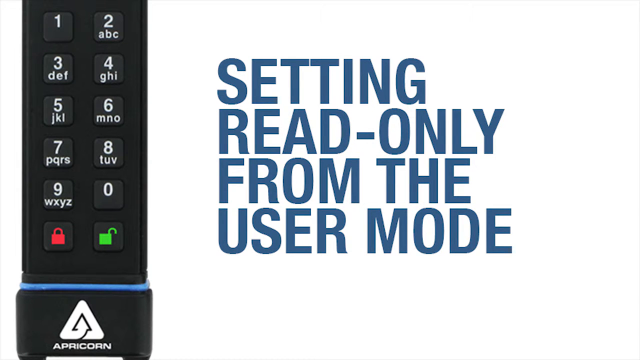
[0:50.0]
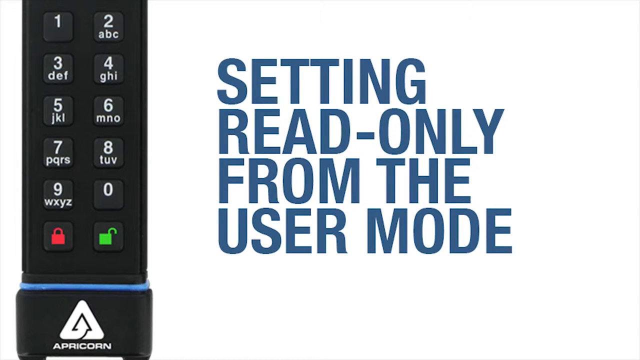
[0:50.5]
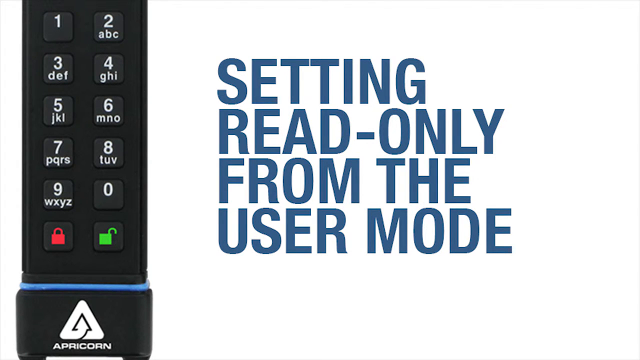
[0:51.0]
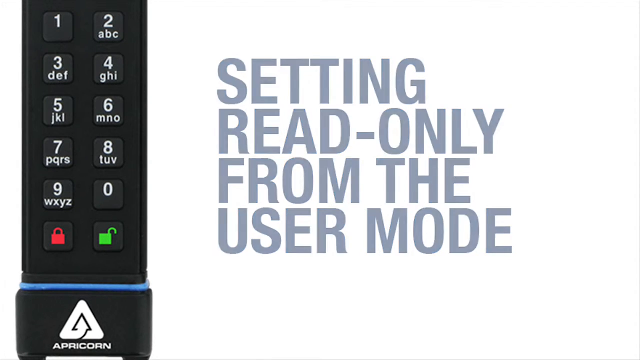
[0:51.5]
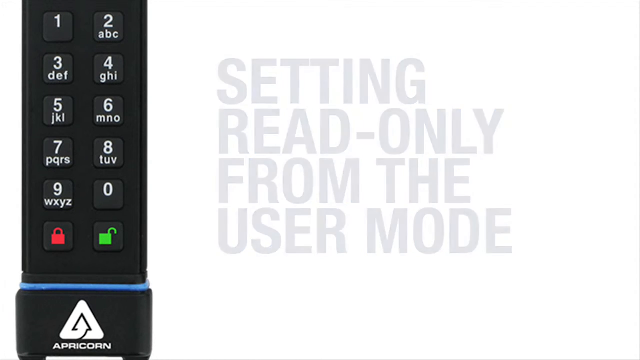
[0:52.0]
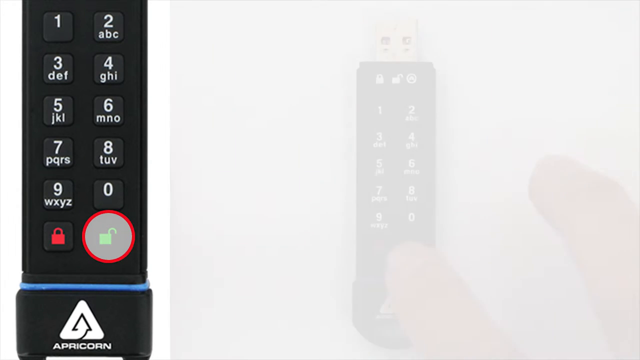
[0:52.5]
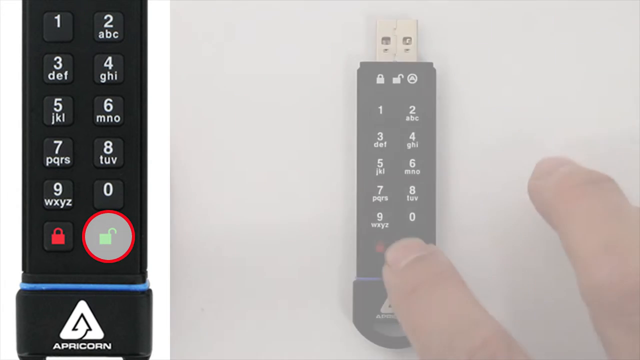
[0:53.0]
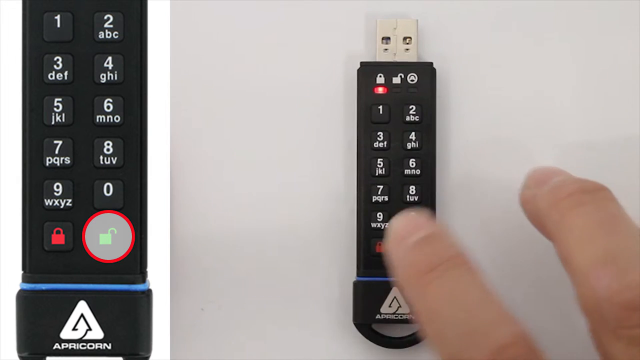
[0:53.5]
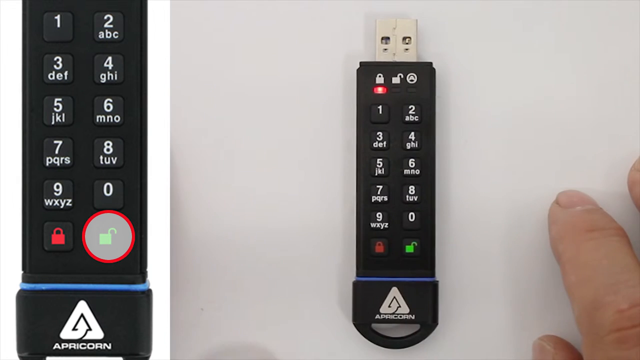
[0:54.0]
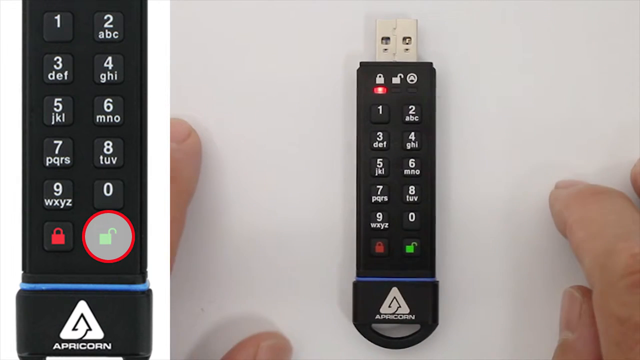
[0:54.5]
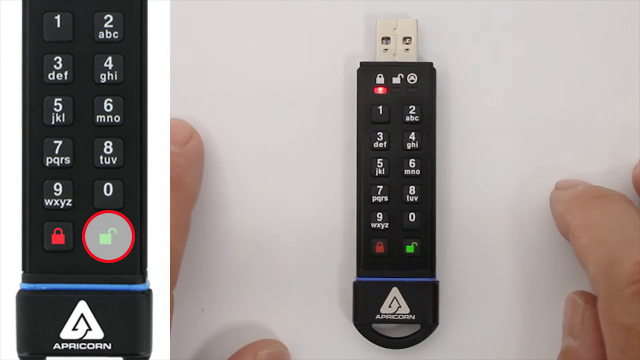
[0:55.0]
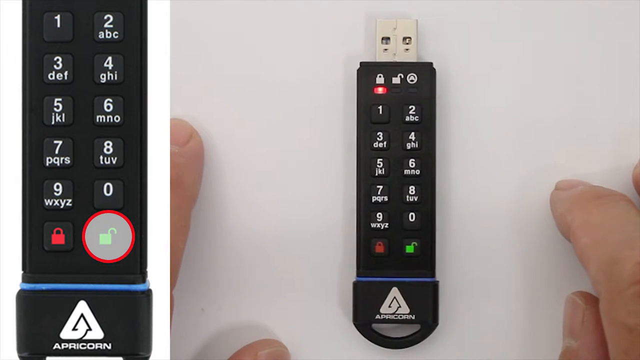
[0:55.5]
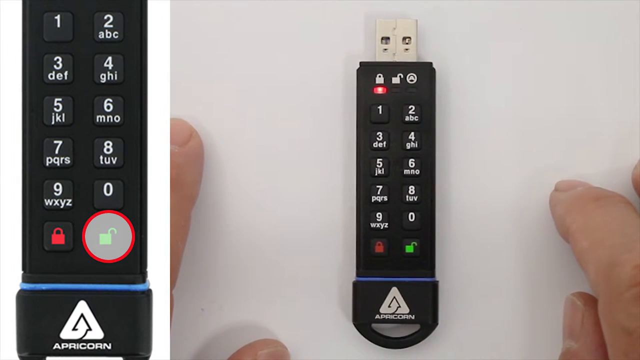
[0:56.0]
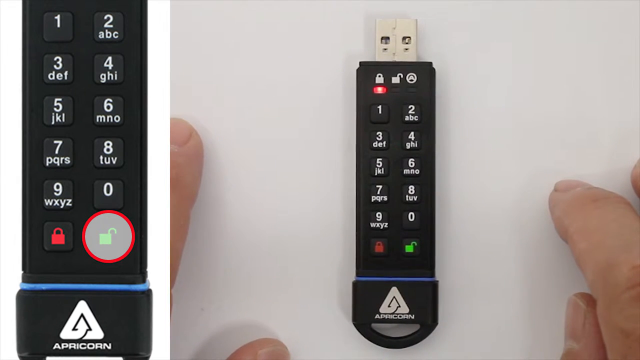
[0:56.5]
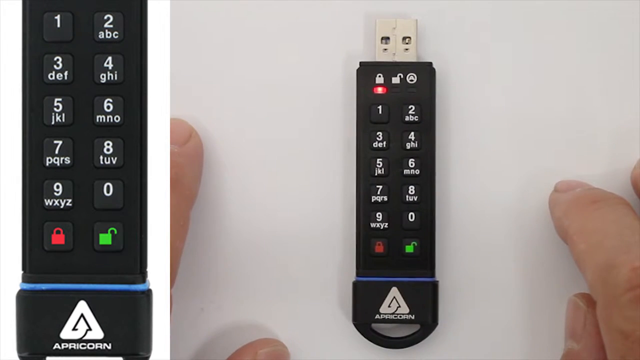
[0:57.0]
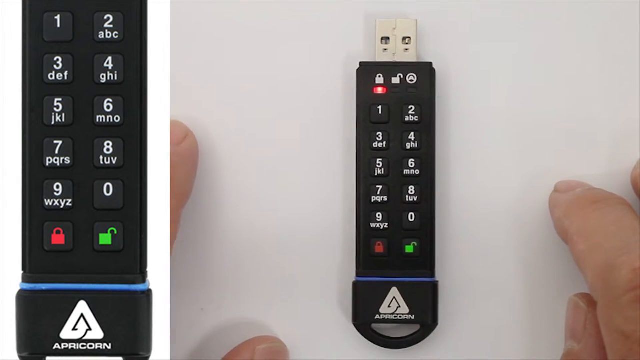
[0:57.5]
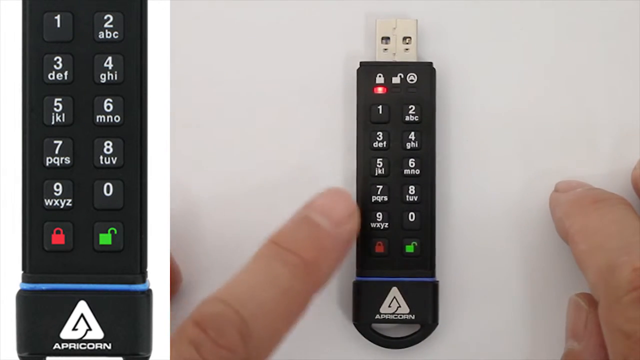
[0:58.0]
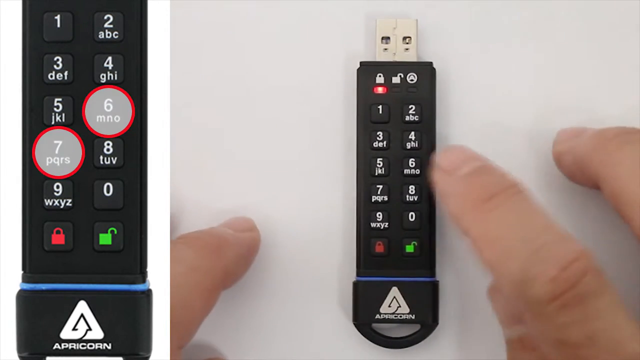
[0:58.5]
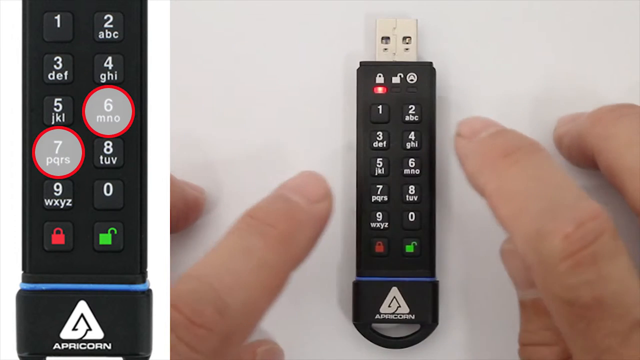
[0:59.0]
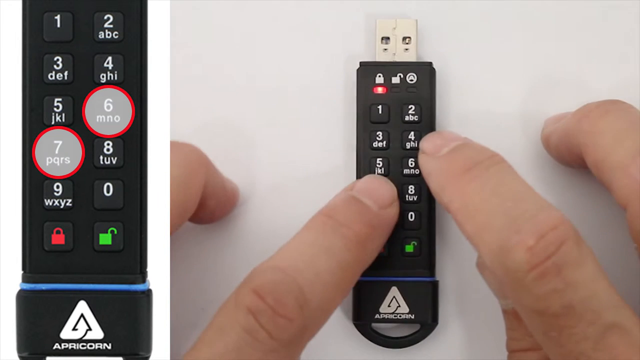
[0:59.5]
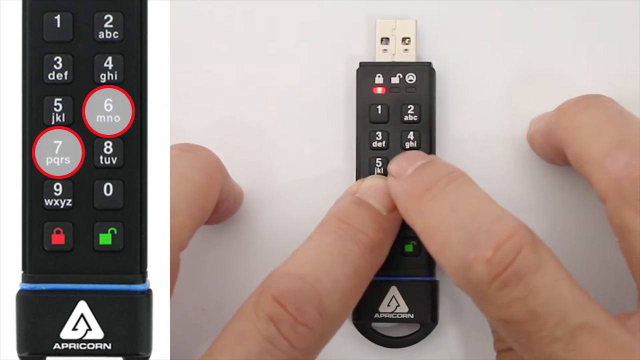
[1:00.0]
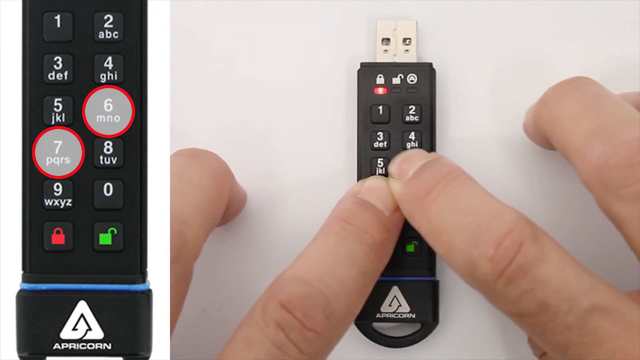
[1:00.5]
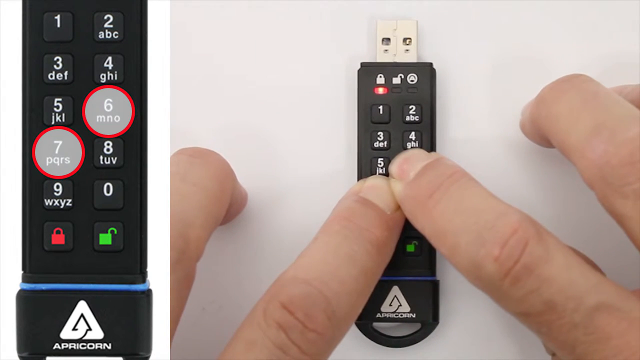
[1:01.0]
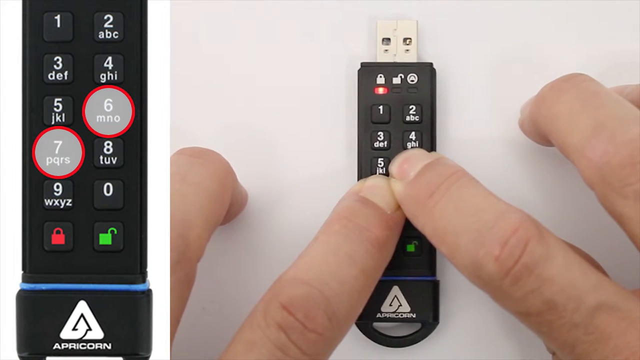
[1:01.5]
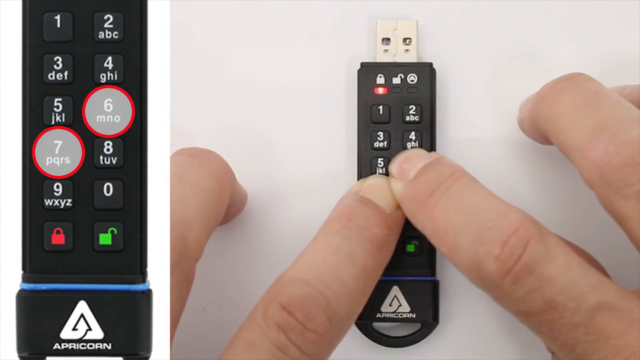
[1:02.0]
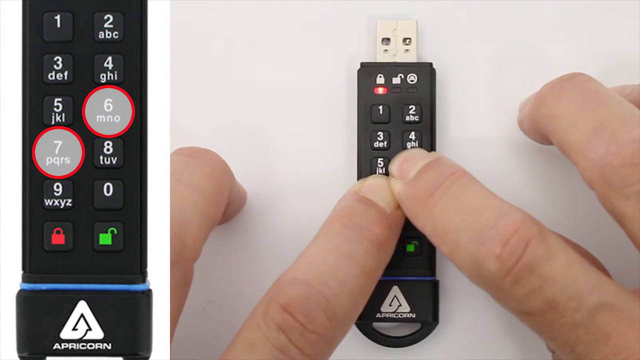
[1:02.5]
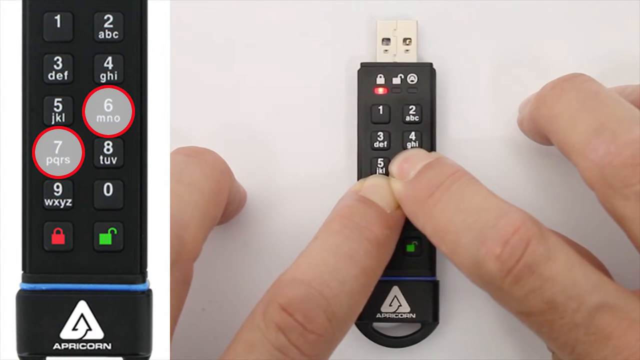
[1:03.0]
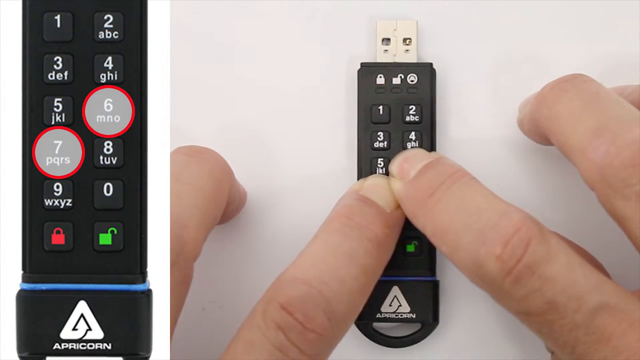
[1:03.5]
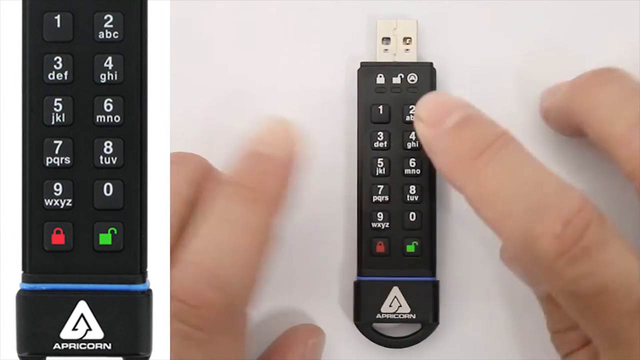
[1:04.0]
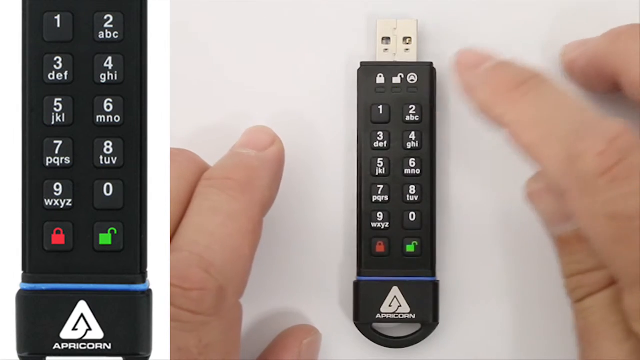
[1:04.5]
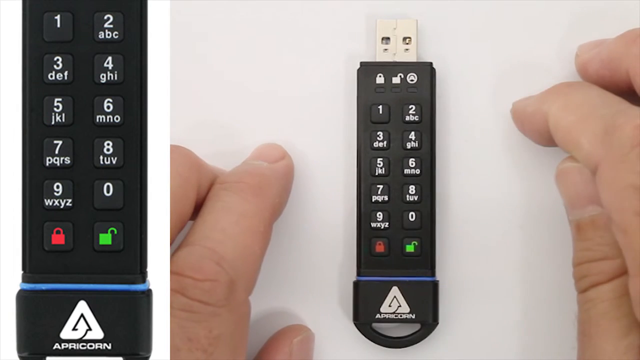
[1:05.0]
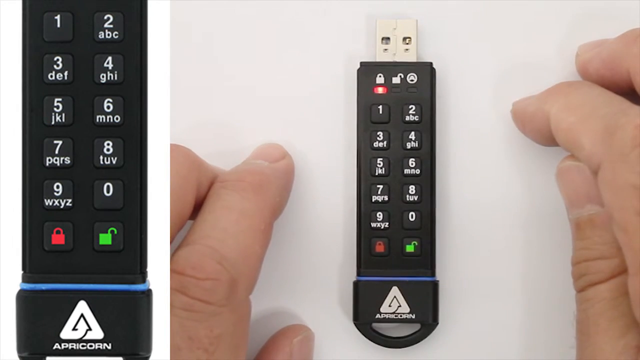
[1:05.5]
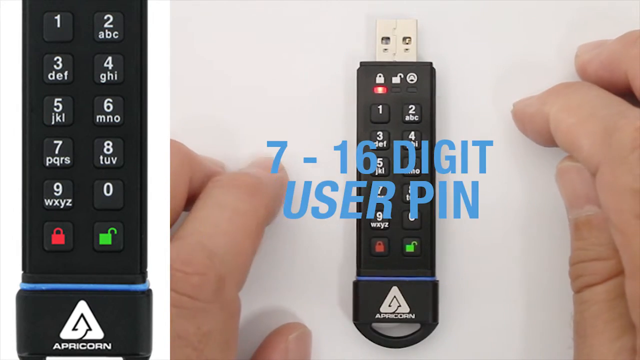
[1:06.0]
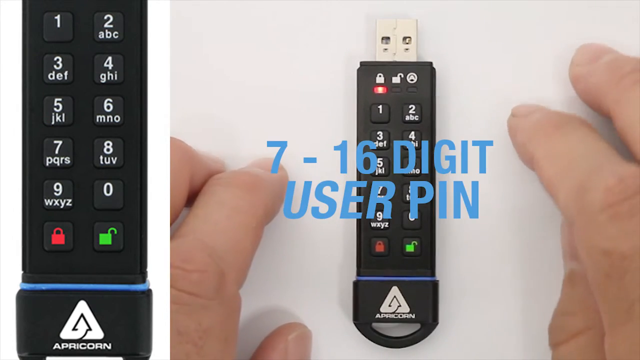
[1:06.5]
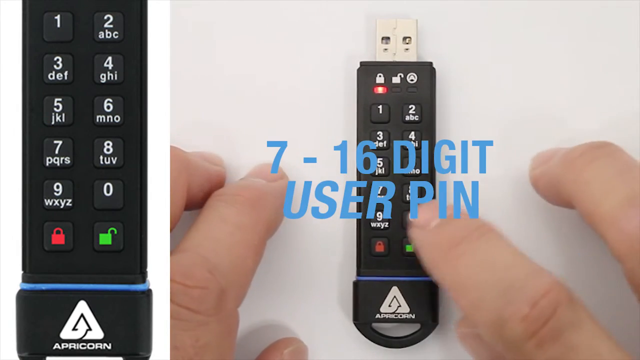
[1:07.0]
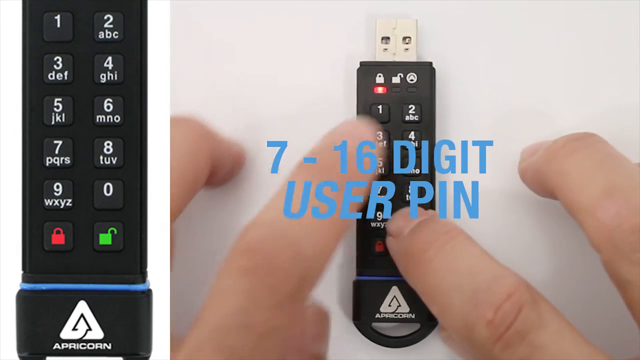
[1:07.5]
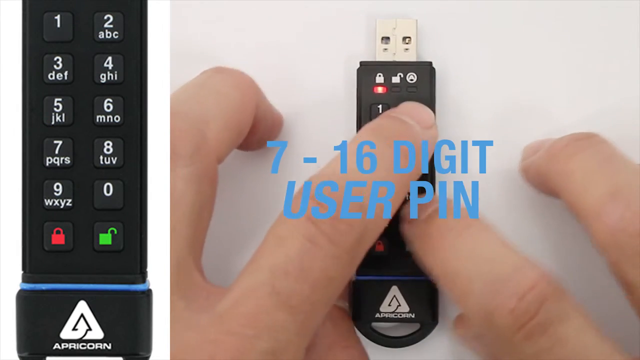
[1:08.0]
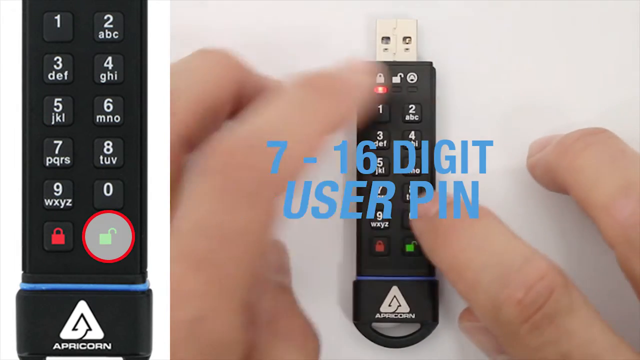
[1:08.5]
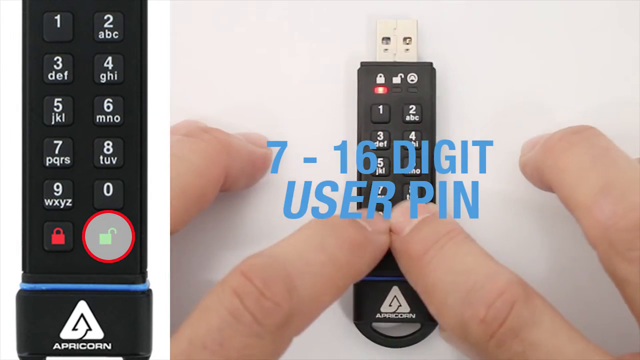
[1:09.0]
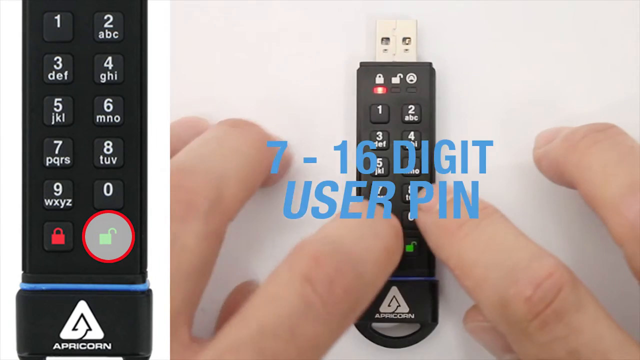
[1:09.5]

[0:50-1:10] The video begins the read-only-from-user-mode procedure. The unlock button, the green button with a padlock, is pressed. Keys 6 and 7 are pressed together, the device beeps, and then a 7-to-16-digit PIN is entered.